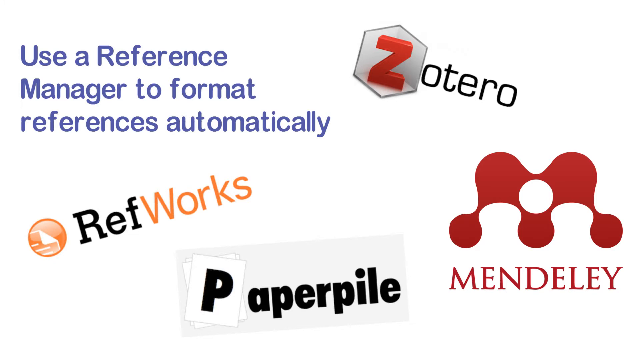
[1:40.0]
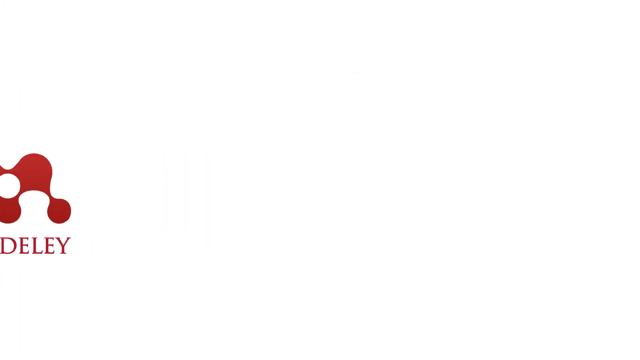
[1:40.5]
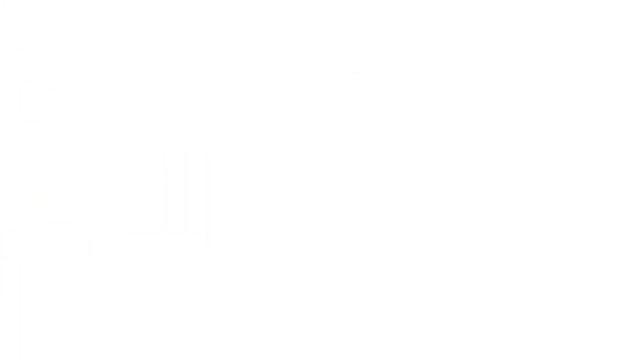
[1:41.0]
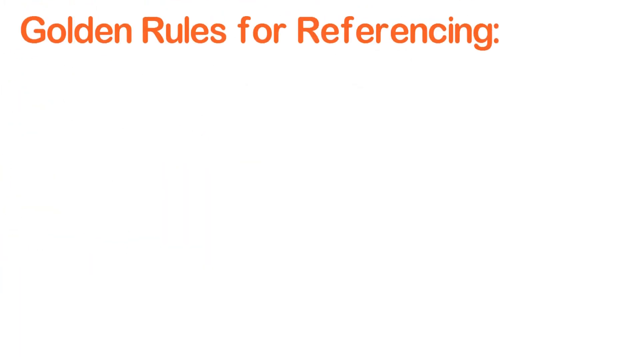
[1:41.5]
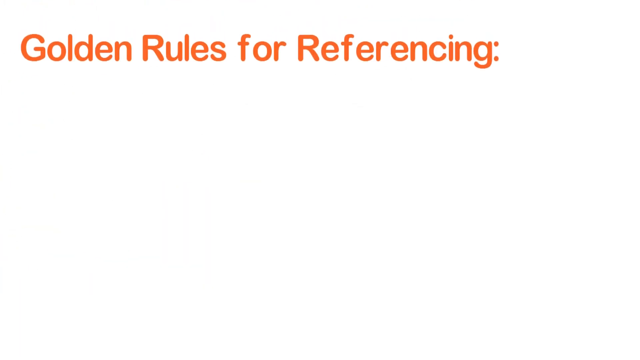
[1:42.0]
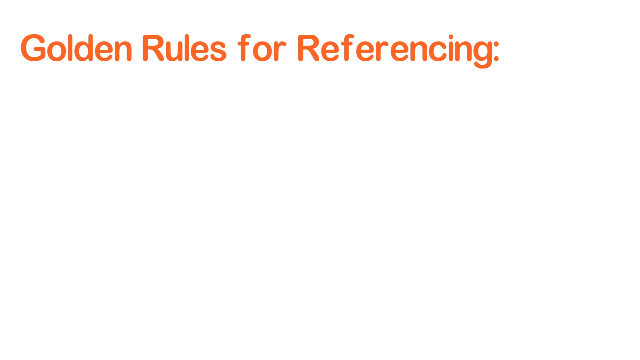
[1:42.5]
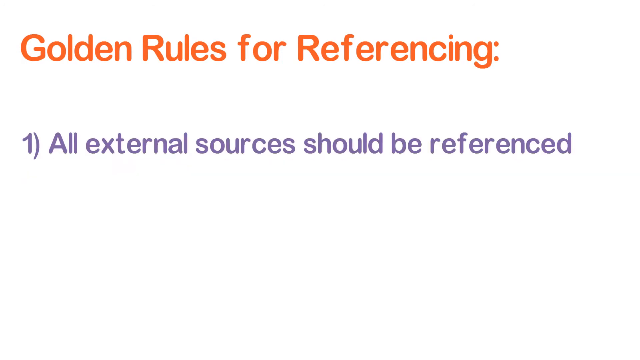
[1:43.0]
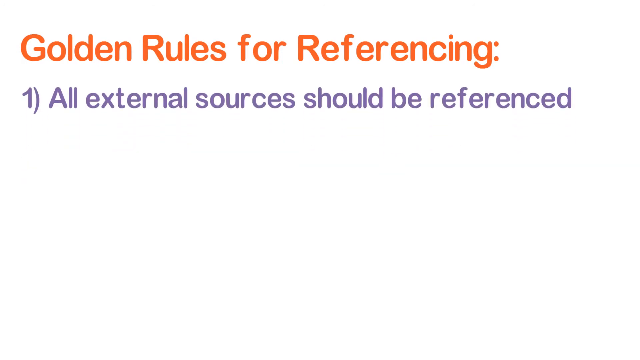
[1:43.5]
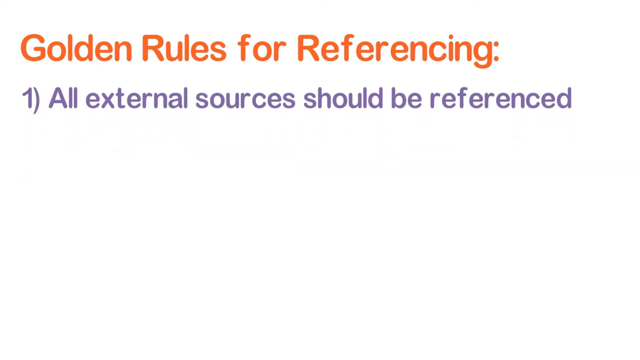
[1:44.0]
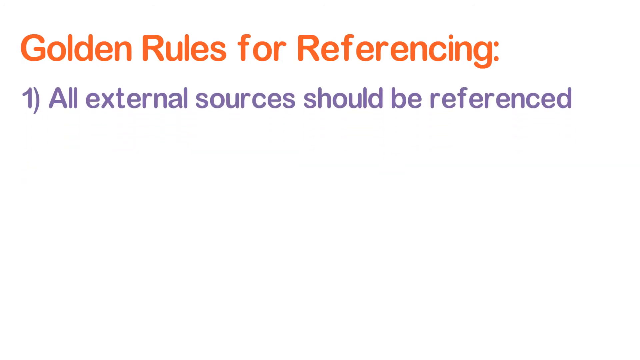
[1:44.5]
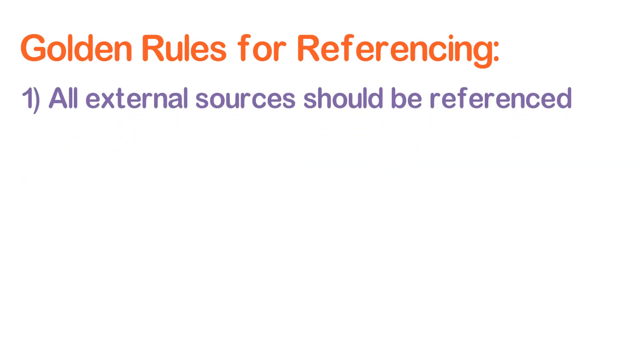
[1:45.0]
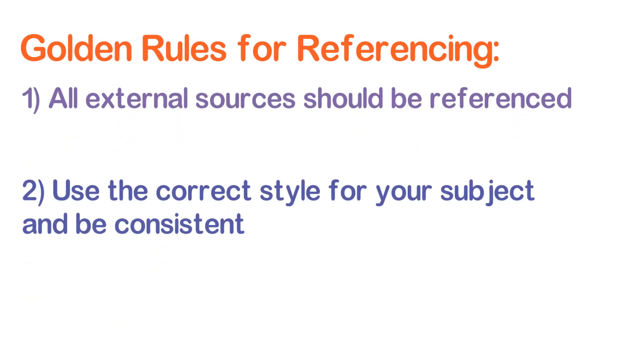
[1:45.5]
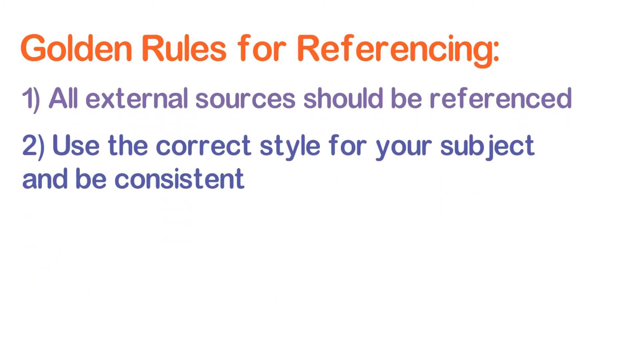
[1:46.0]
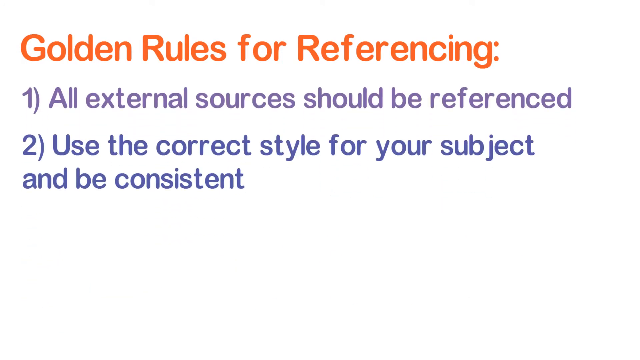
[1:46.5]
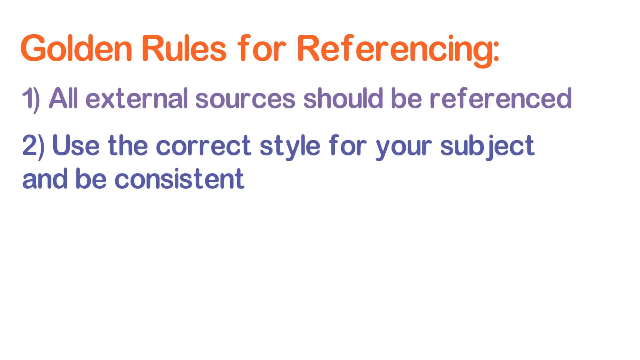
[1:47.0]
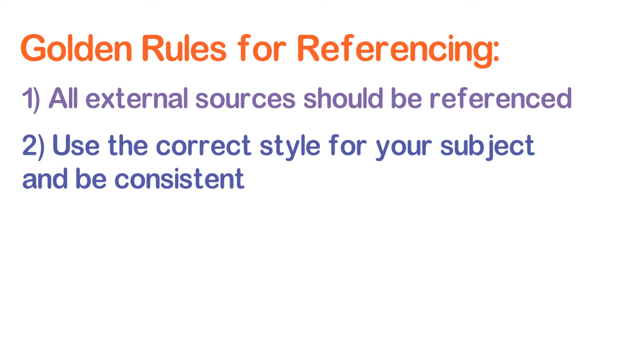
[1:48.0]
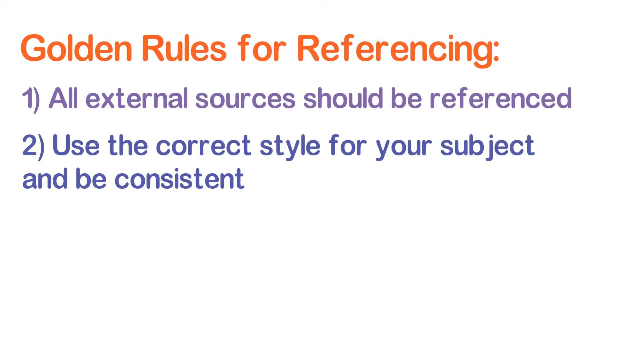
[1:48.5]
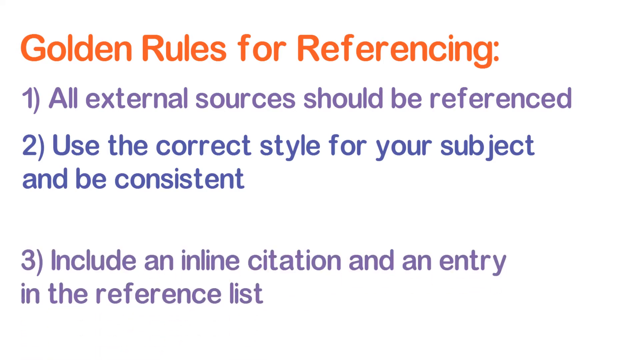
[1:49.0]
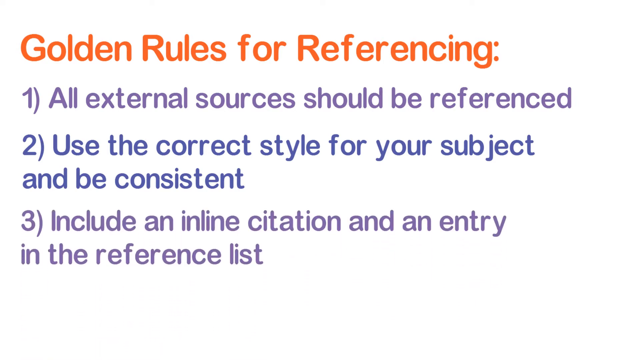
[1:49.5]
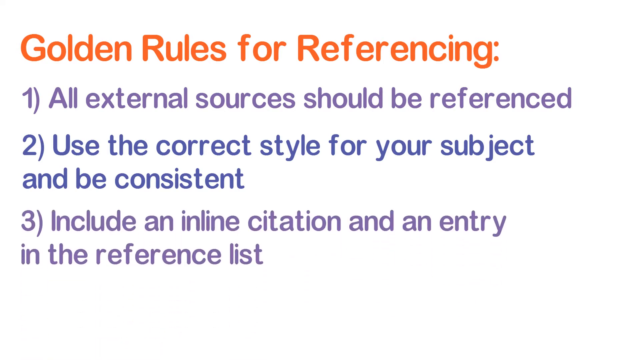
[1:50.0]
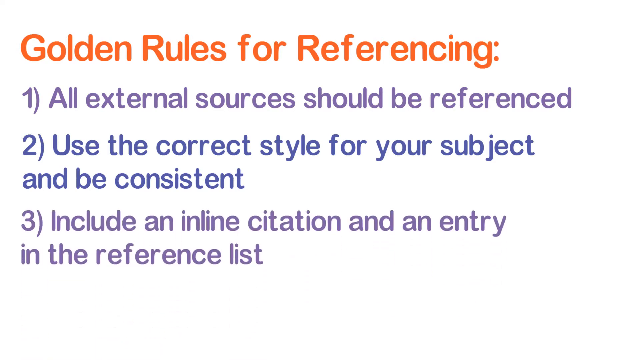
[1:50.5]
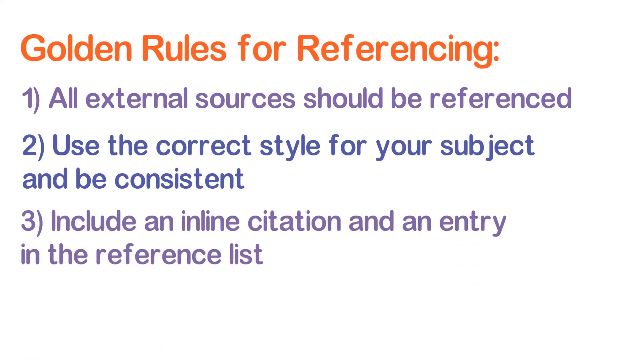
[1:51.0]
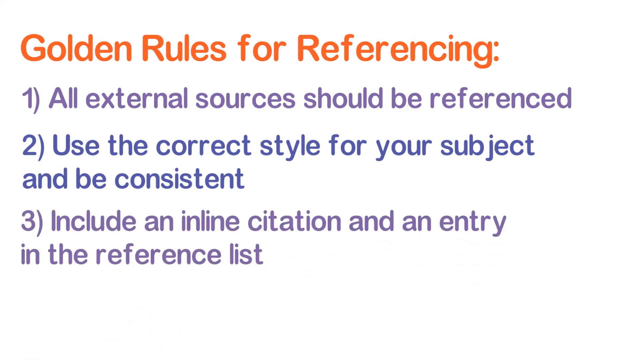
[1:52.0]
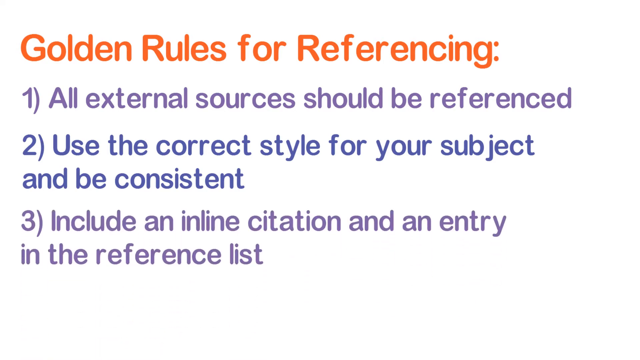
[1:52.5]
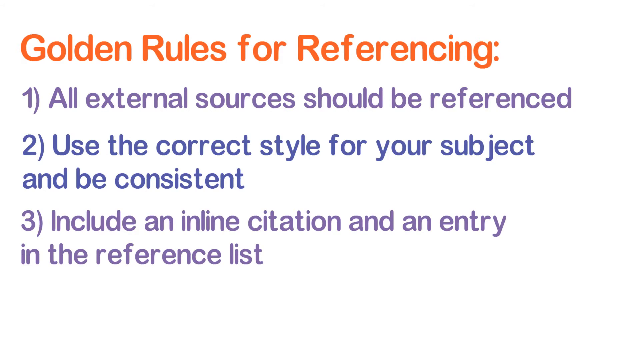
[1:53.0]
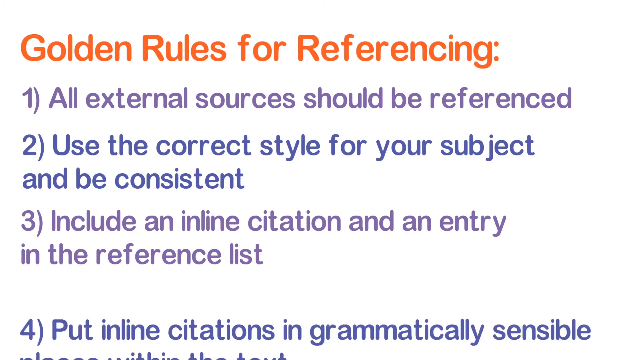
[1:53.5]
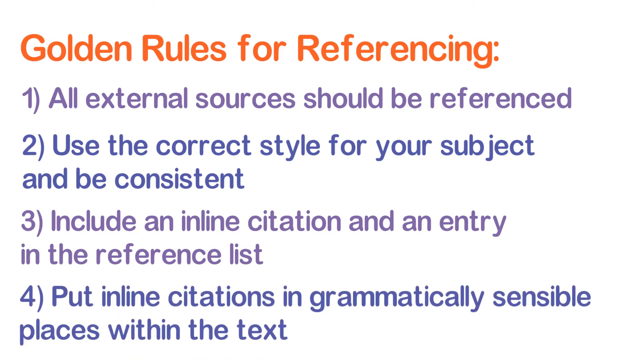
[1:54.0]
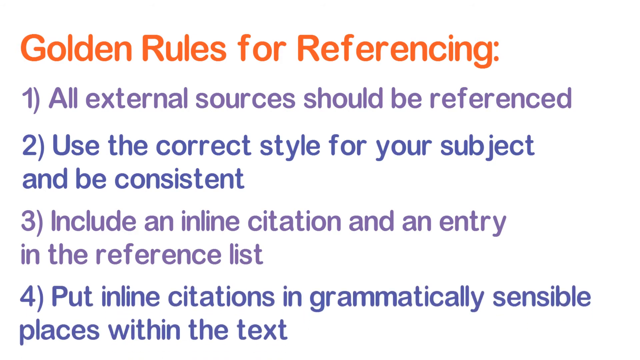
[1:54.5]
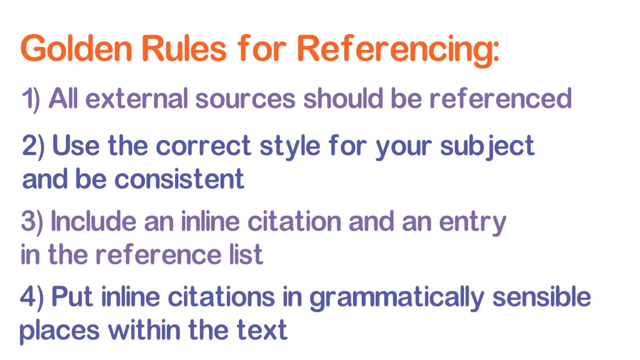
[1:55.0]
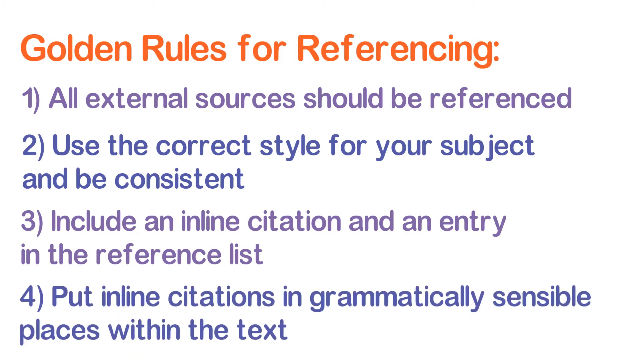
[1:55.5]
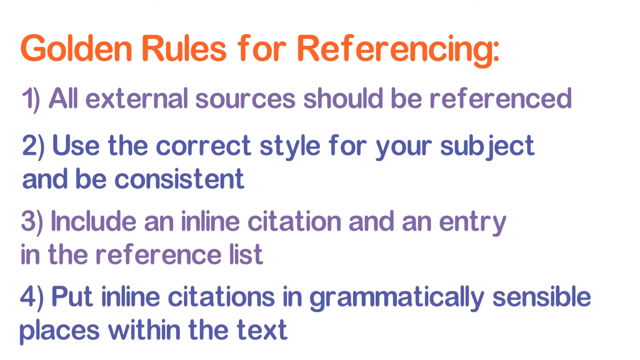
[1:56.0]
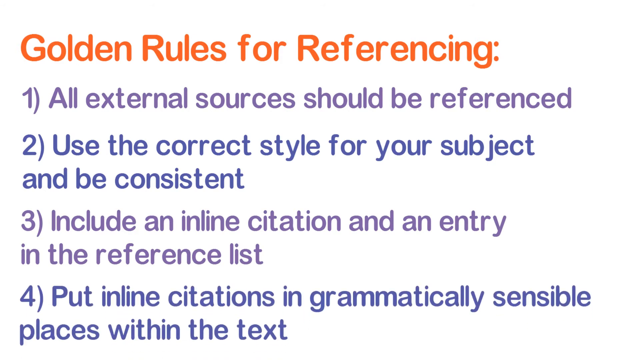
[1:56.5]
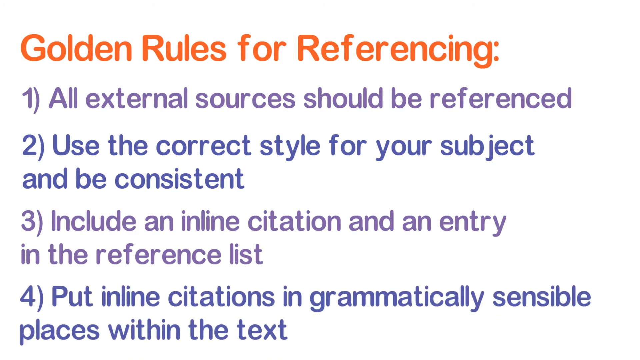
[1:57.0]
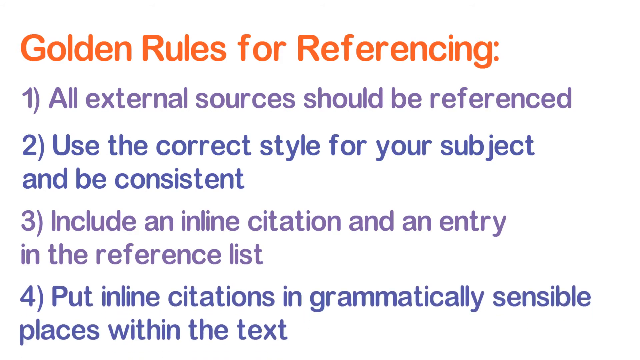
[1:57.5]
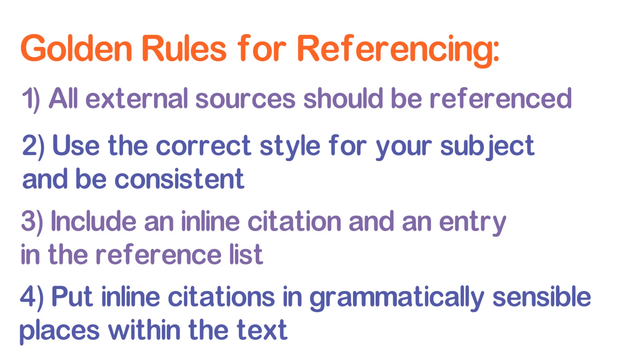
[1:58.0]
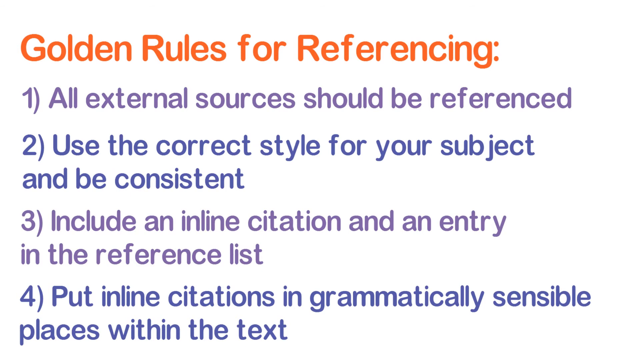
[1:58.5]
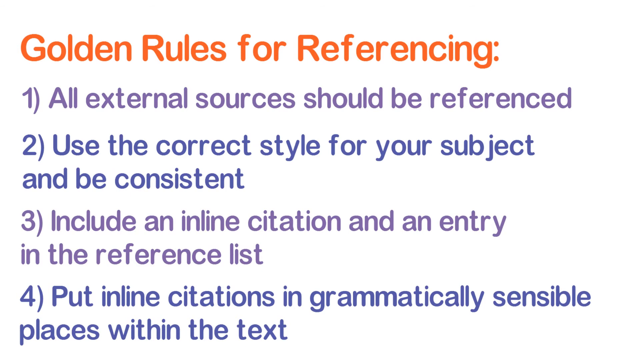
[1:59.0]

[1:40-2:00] The screen is white, and in the top left-hand corner, in blue, is the text "Use a reference manager to format references automatically." Underneath is the word "ref works," with "ref" in black and "works" in orange. Underneath that, to the right, is the word "paper pile" in black. To the right of that, in the bottom right-hand corner of the screen, is the word "manly" in red, with a letter M design above it, and above that is the word "zotero," with the Z in red and "otero" in black. That then goes away and another white screen appears. At the top, in orange, is "Golden rules for referencing." Underneath, in purple, is number one, "All external sources should be referenced"; under that, in blue, number two, "Use a correct style for your subject and be consistent"; under that, in purple, number three, "Include an inline citation and an entry in the reference list"; and underneath that, in blue, "Put inline citations in grammatically sensible places within the text."